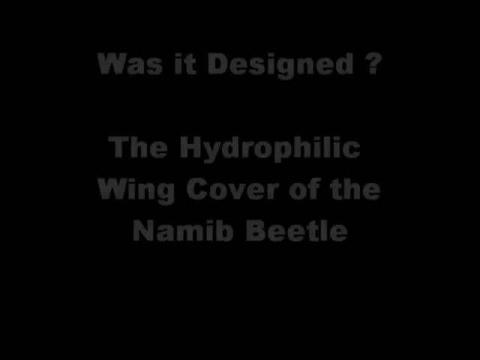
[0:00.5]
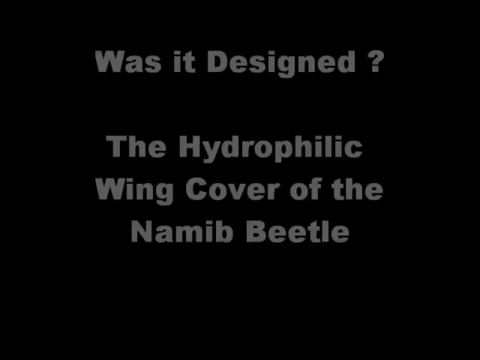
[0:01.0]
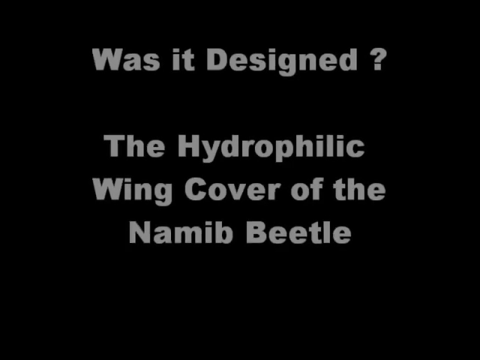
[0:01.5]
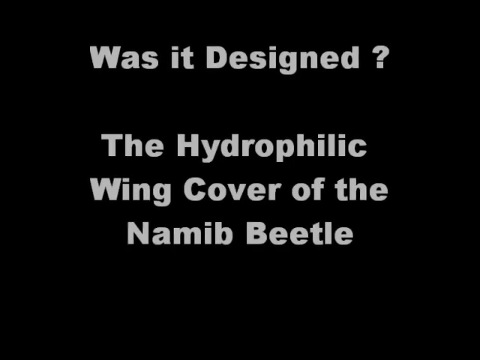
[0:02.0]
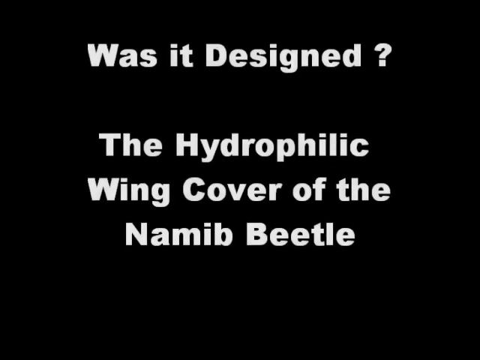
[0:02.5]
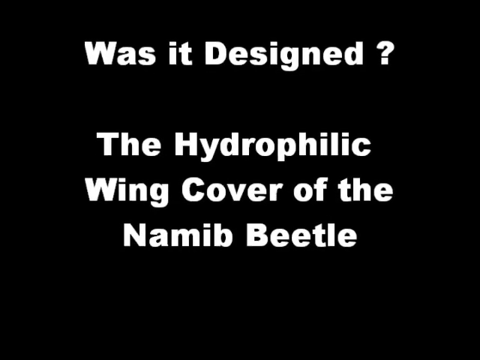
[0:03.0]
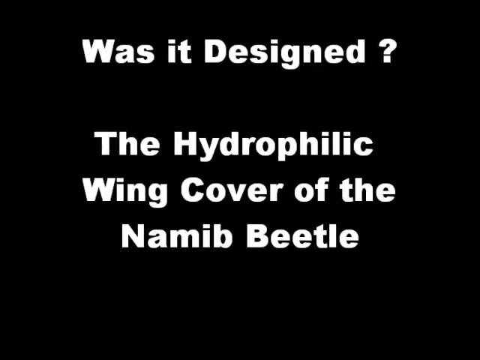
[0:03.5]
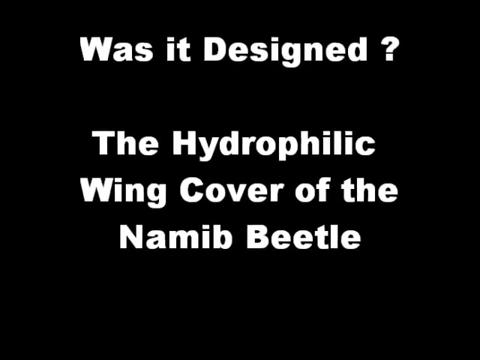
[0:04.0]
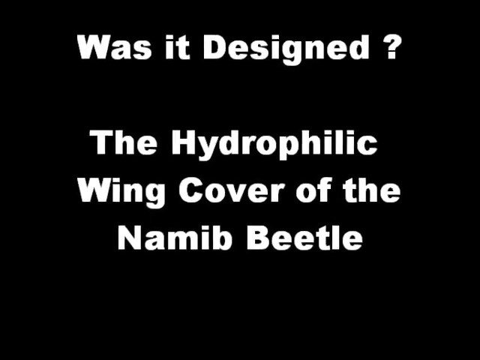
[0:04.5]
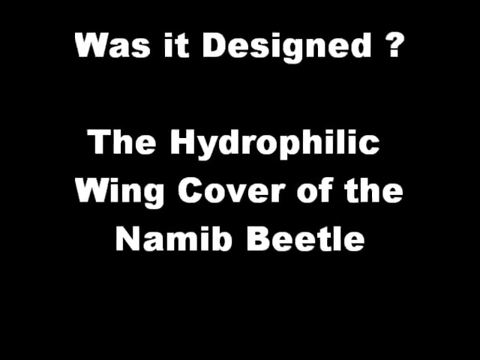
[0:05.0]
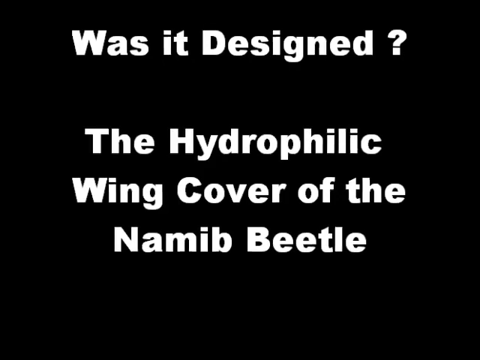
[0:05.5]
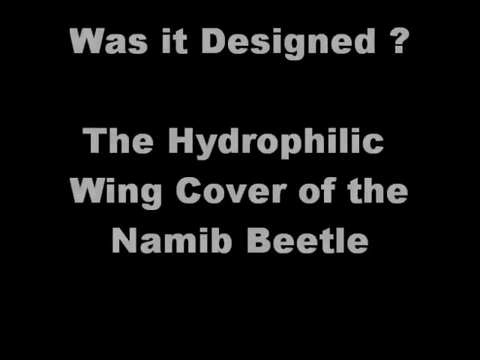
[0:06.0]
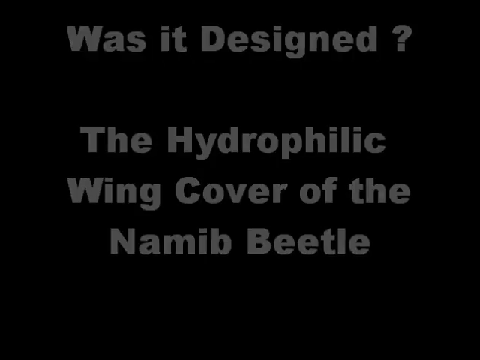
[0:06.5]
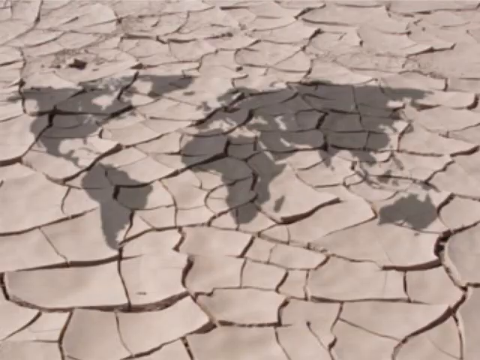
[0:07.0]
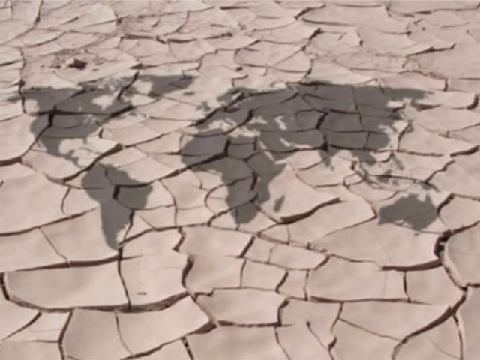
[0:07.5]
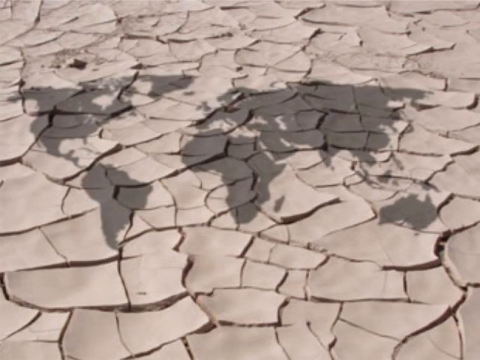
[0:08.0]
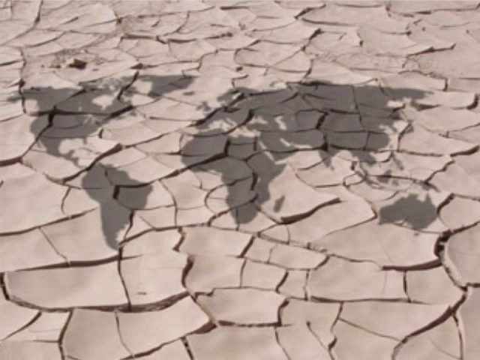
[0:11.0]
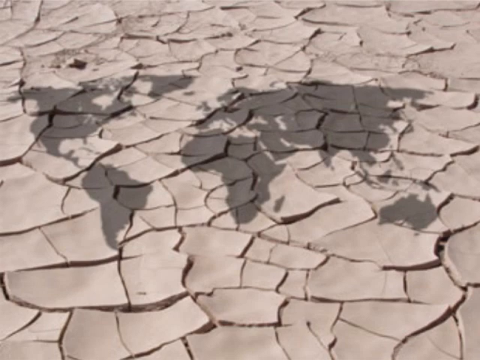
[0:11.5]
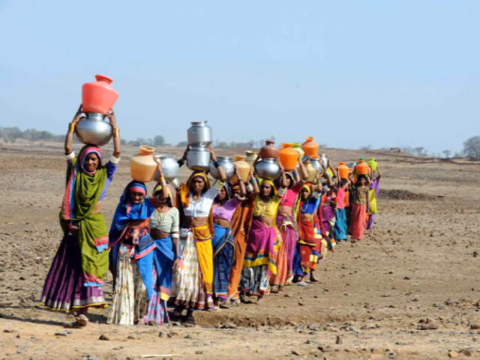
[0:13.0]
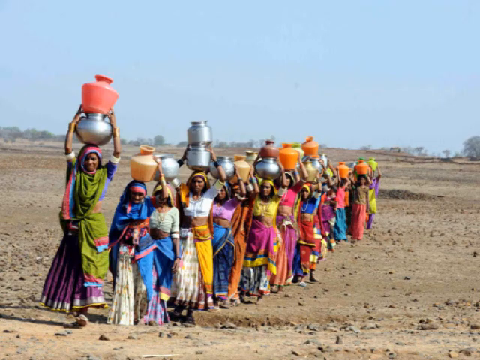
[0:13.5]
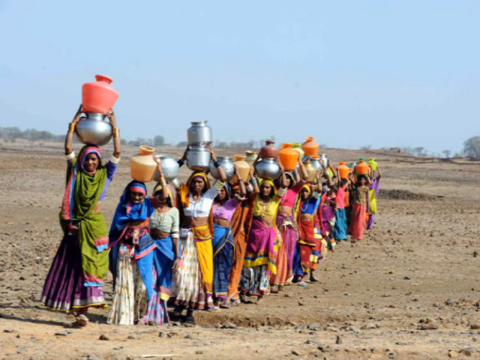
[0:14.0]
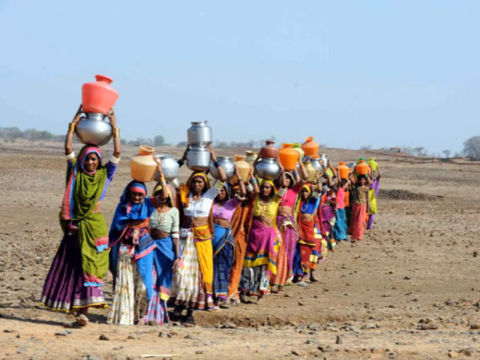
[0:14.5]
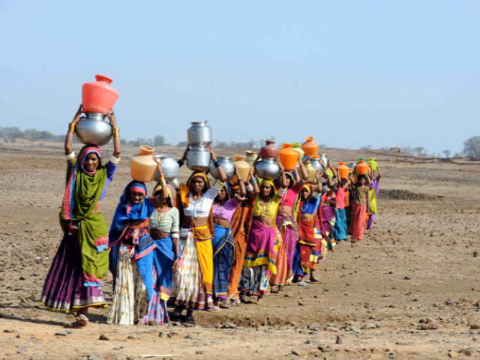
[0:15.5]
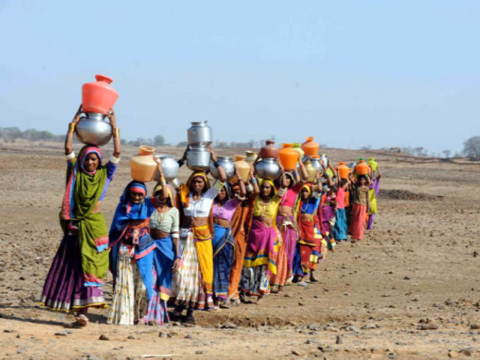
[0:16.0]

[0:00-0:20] A black screen displays white text ending with "the hydrophilic wing cover of the Namib beetle." The video then cuts to an image of a map of planet Earth. On a dirt ground, many women stand in a line holding jars above their heads, some holding one and some holding two. The jars come in many colors, including silver, pink, orange and green. The women wear incredibly colorful uniforms and clothing, including skirts and other garments in blue, green, pink, purple, white, yellow and orange. They are standing in a desert area as they bring the jars across.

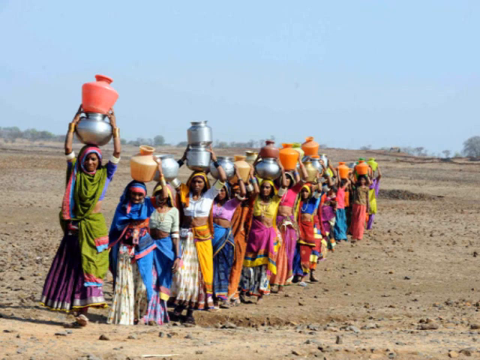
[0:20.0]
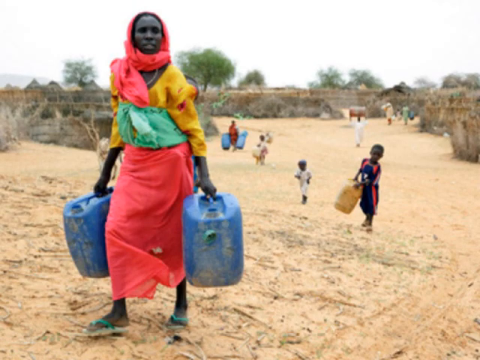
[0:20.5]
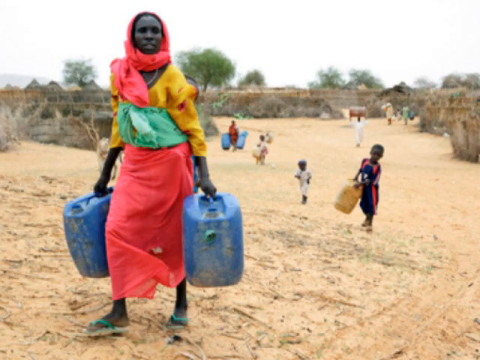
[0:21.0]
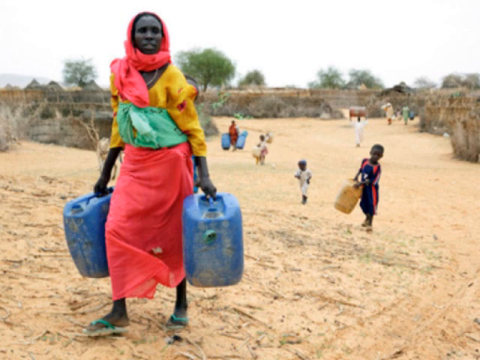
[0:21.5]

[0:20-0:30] A woman holds two large canisters, one in her left hand and one in her right, and wears red, pink, yellow and green clothing. Children are shown in the background.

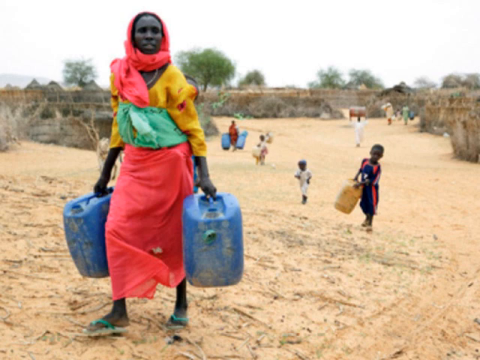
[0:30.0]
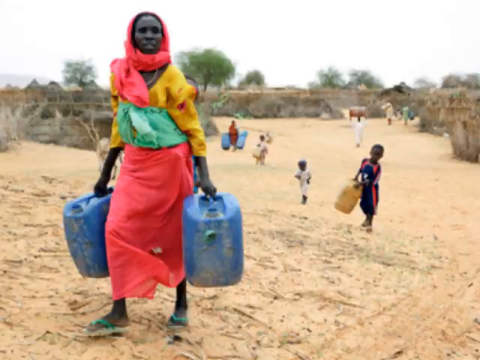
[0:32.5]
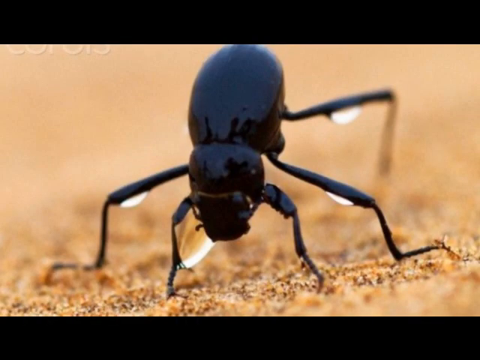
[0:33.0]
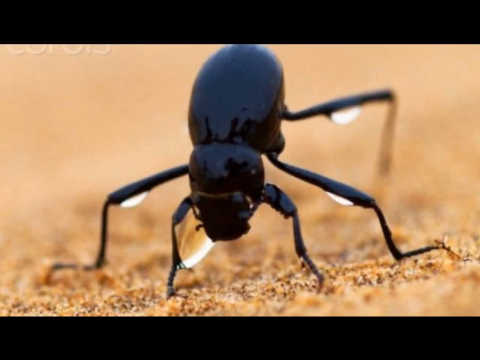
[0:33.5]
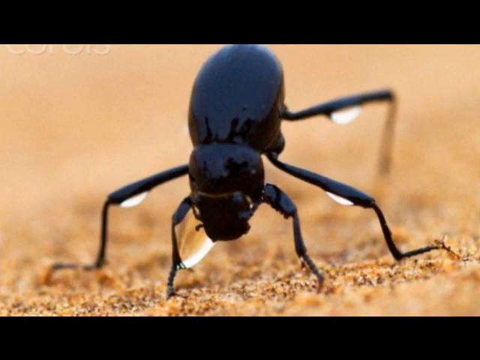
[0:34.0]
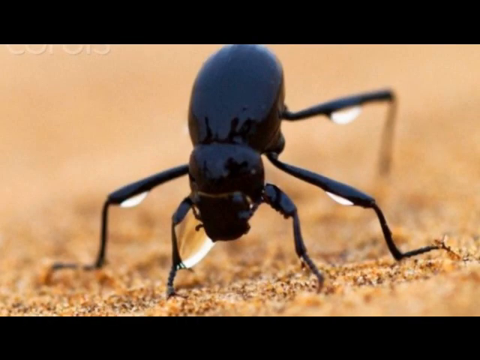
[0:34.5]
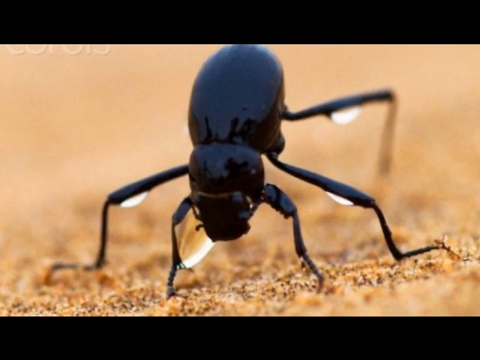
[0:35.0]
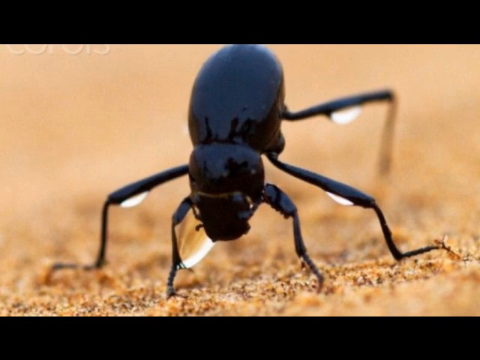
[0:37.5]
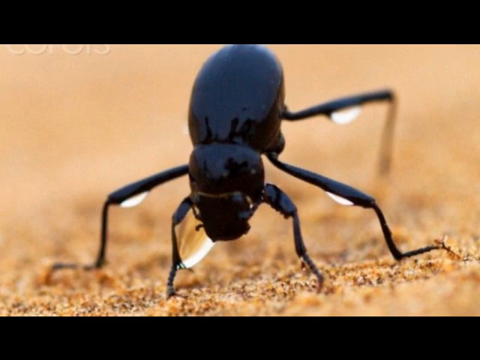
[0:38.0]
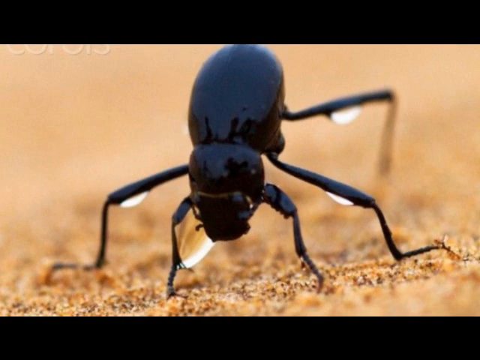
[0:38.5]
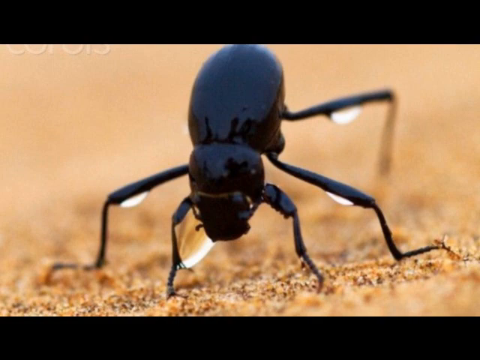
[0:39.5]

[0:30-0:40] An African woman stands in a desert area with dirt-brown sand on the ground. She holds two blue canisters, one in her left hand and one in her right, and wears a pink scarf, a yellow shirt, a green shirt and a pink skirt. Behind her are children: one boy behind her wears dark clothes and holds a canister himself, and another kid is behind him. Blurred people are visible in the background, with dry bushes to the left and right of the people walking.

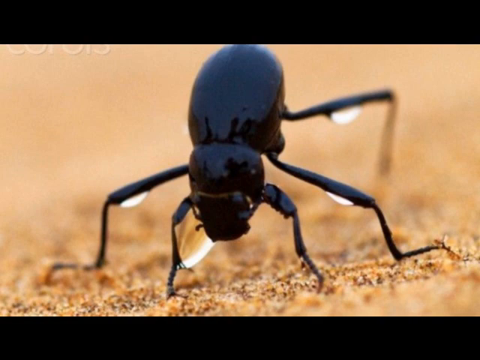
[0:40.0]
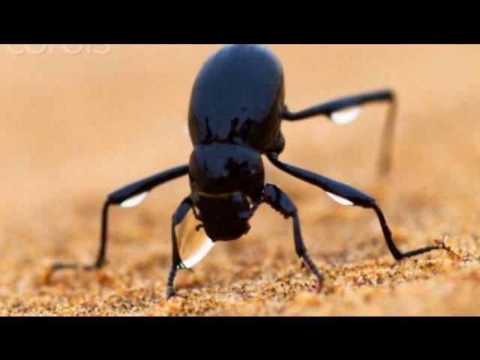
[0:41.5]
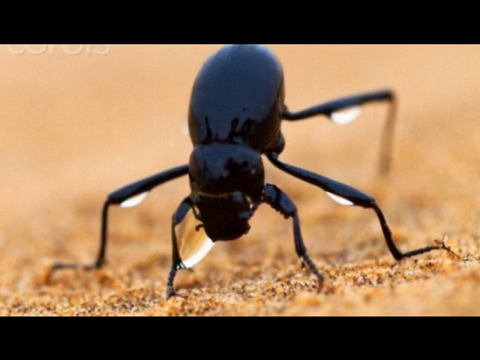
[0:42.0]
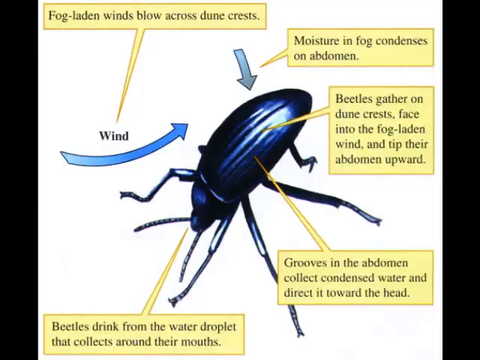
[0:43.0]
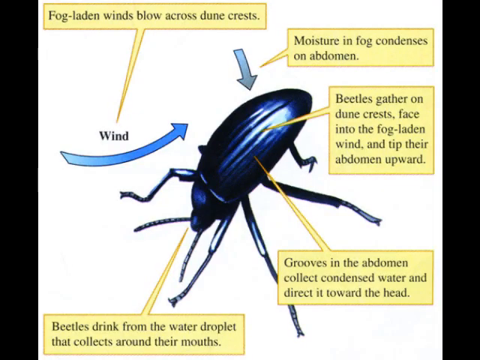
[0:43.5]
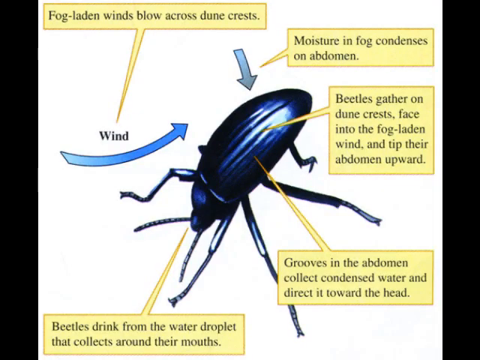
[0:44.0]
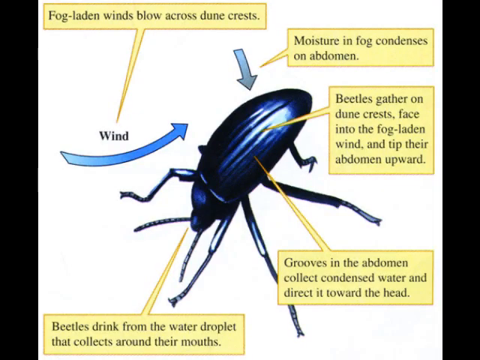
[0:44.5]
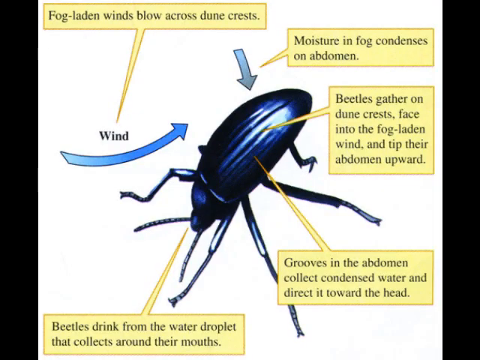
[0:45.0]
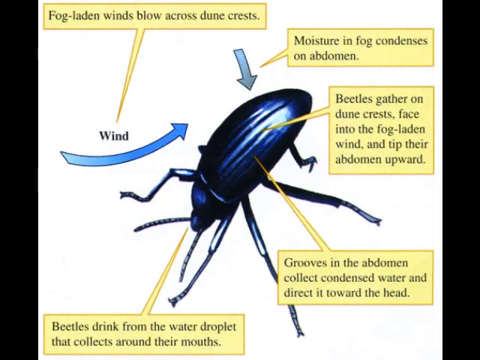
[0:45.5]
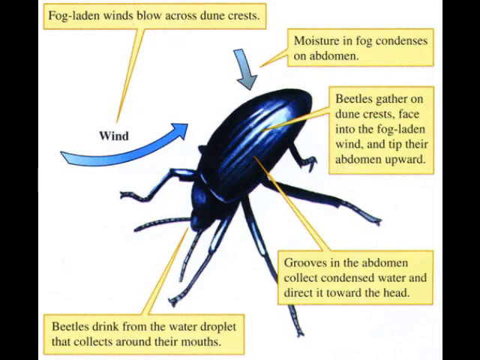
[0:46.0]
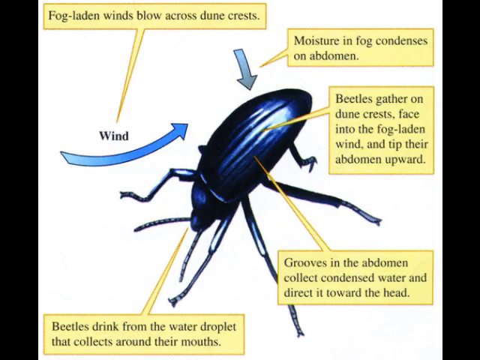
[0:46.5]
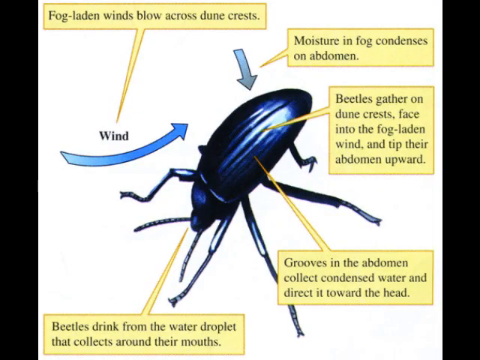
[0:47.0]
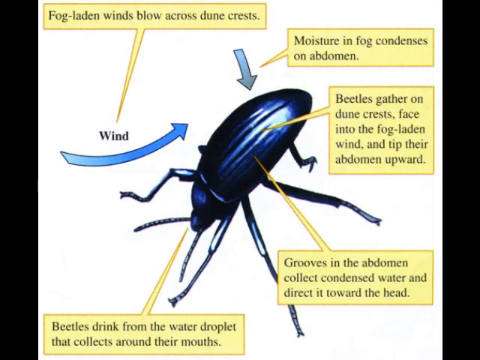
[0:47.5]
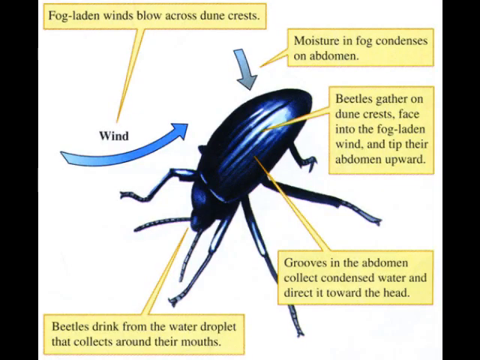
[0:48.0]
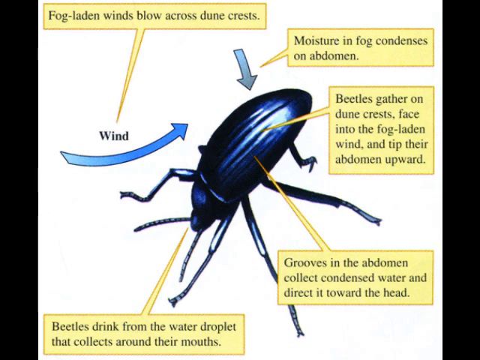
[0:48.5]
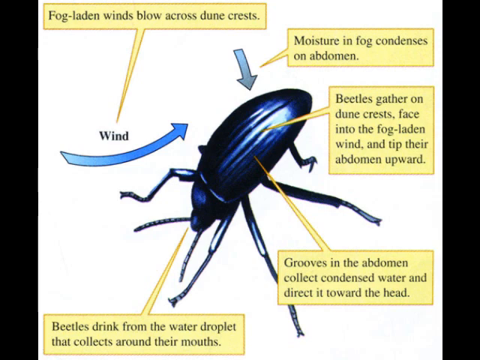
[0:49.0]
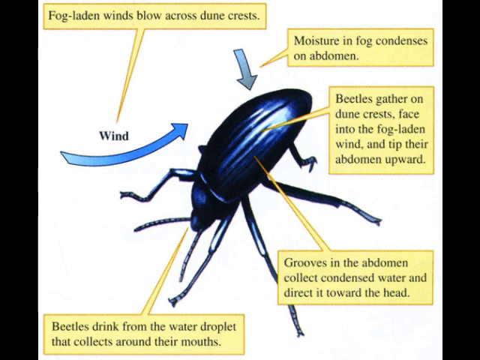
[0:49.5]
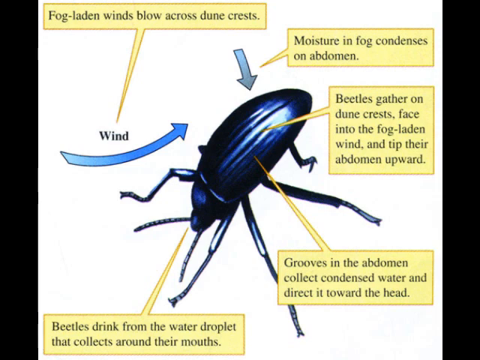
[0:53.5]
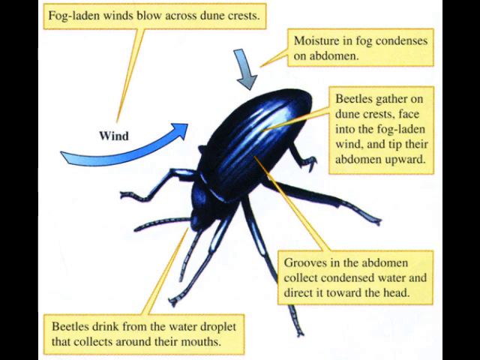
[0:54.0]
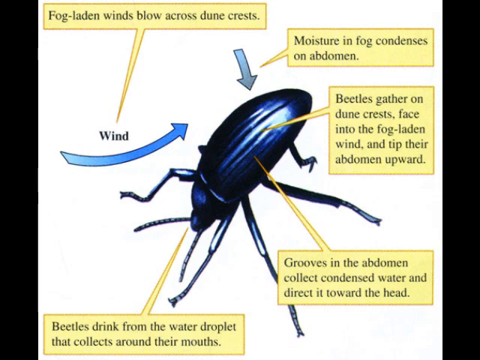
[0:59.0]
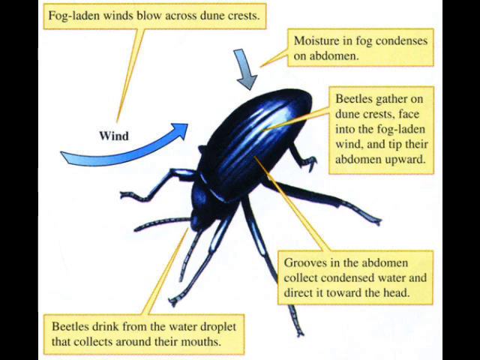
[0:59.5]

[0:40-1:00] A black beetle is on sandy ground. The video cuts to a cartoon image of this type of beetle, which is black with long arms and legs, and then shows a diagram of it. The wind is shown as a blue arrow below it, along with several squares of text. The top square says "fog laden winds blow across dune crests"; the next one, to its right, says "moisture and fog condenses on abdomen"; the next says "beetles gather on dune crests face into the fog laden wind and tip their abdomen upward"; the next says "grooves in the abdomen collect condensed water and direct it toward the head"; and the last says "beetles drink from the water droplet that collects around their mouths." All of the squares point at different sections of the beetle's body.